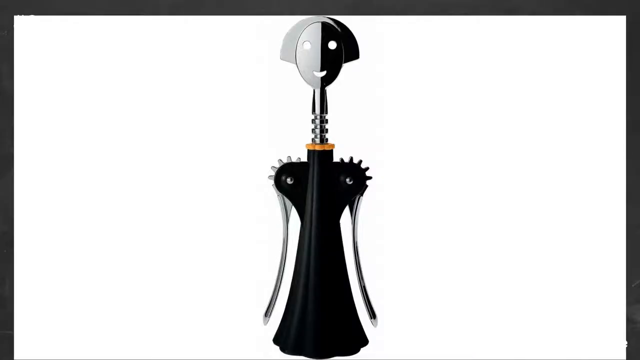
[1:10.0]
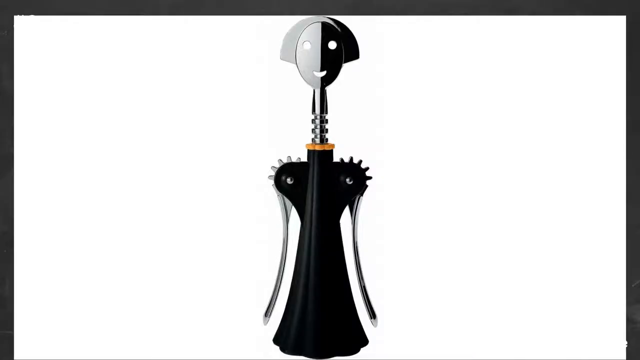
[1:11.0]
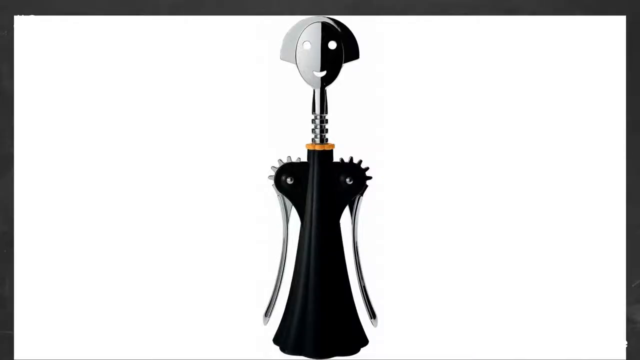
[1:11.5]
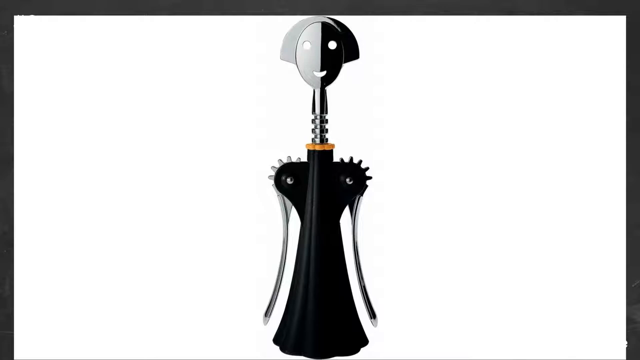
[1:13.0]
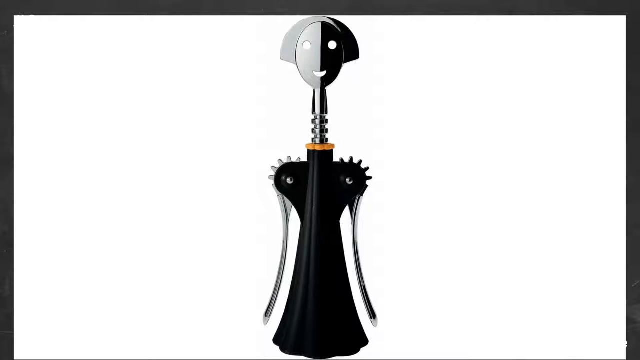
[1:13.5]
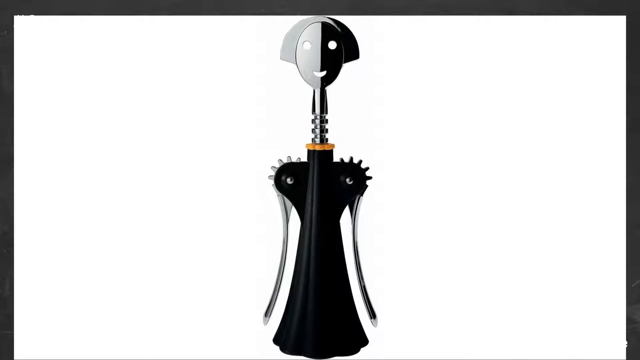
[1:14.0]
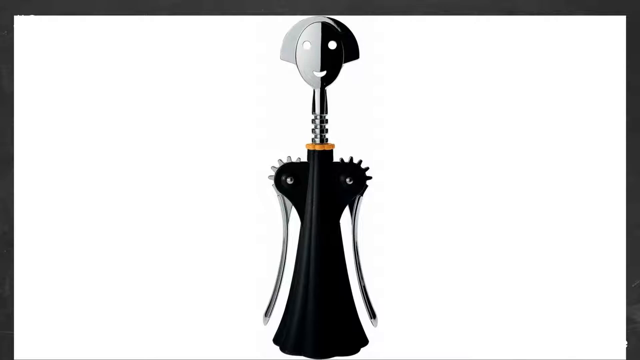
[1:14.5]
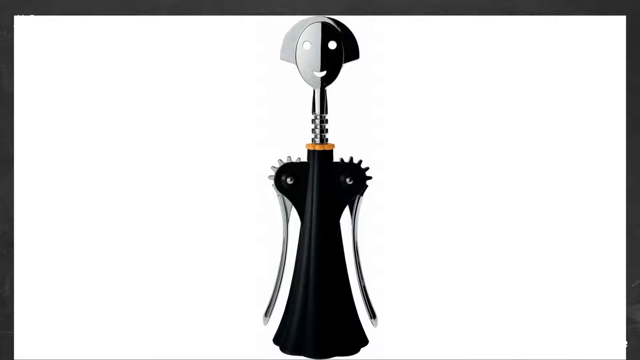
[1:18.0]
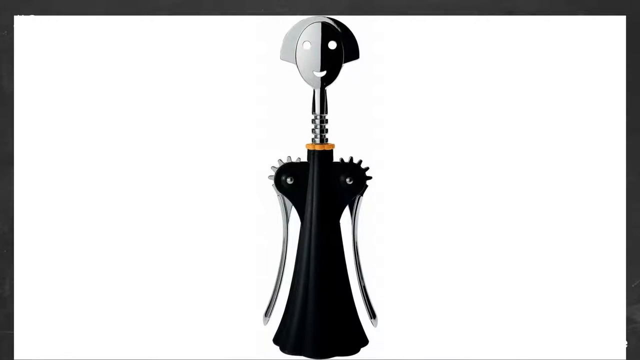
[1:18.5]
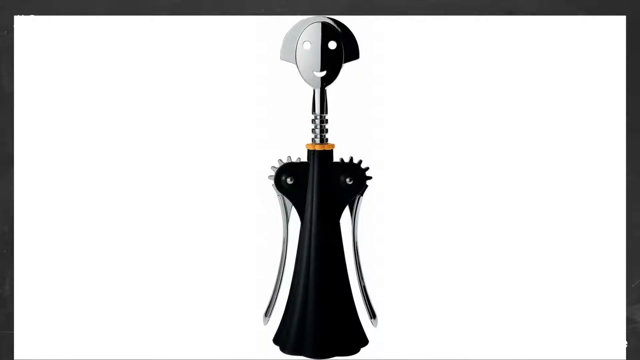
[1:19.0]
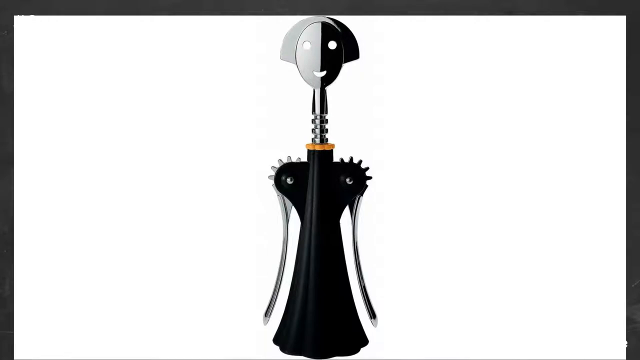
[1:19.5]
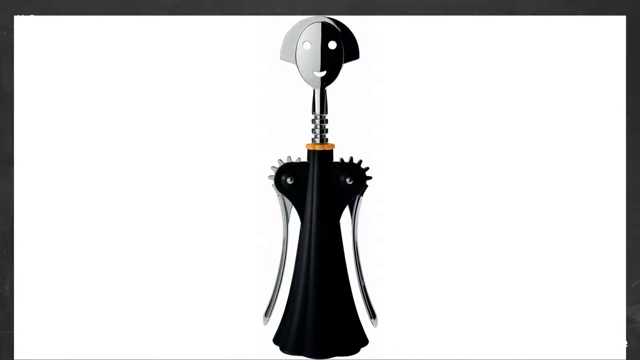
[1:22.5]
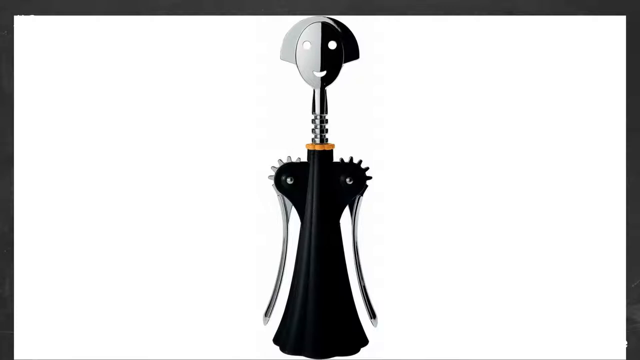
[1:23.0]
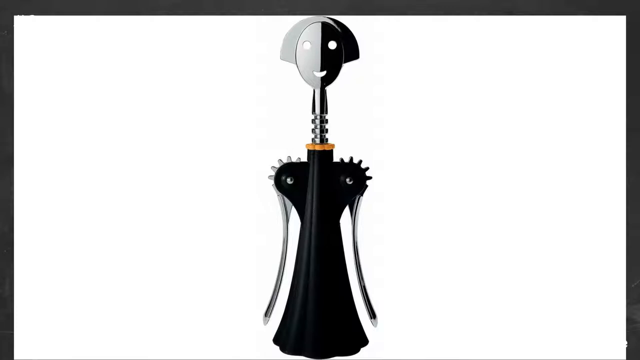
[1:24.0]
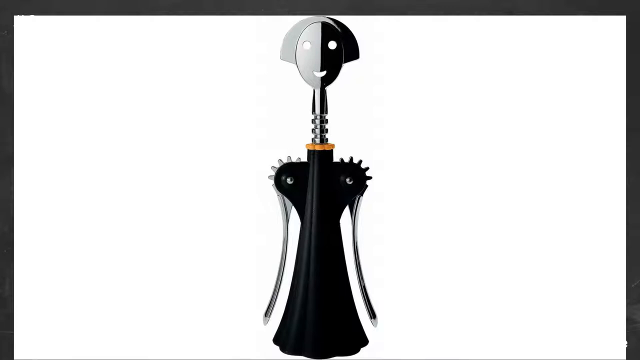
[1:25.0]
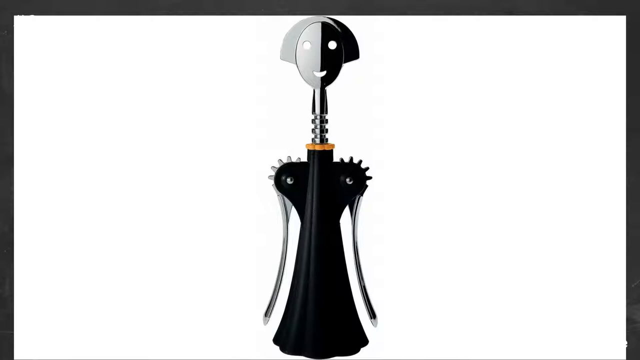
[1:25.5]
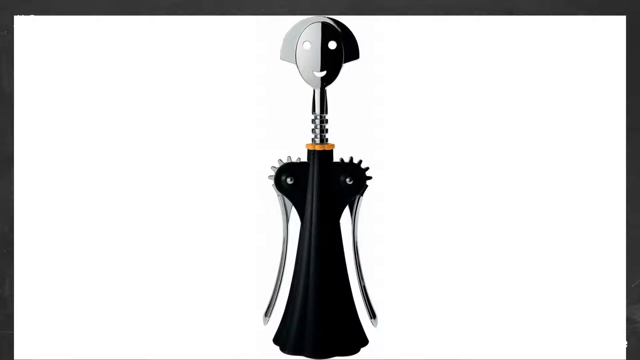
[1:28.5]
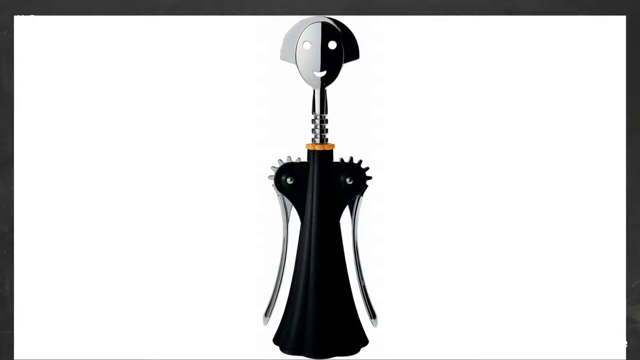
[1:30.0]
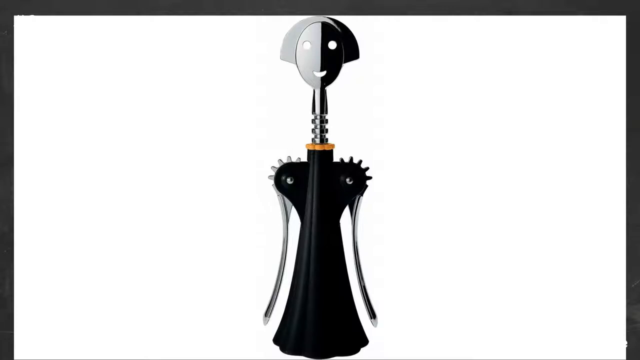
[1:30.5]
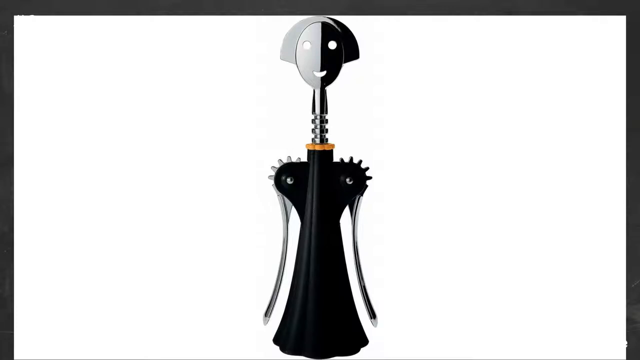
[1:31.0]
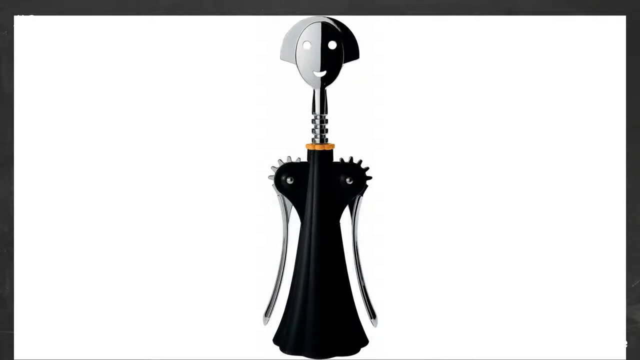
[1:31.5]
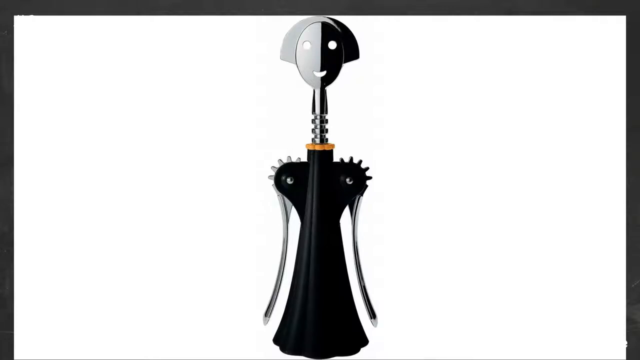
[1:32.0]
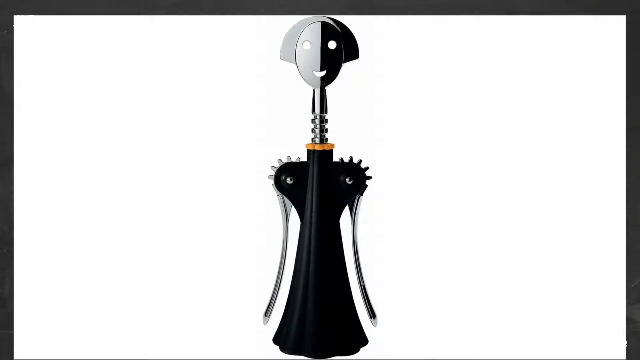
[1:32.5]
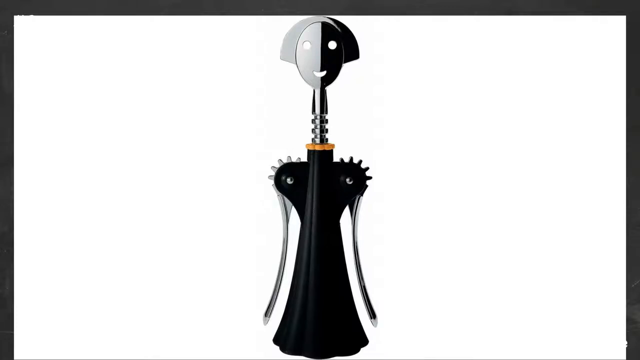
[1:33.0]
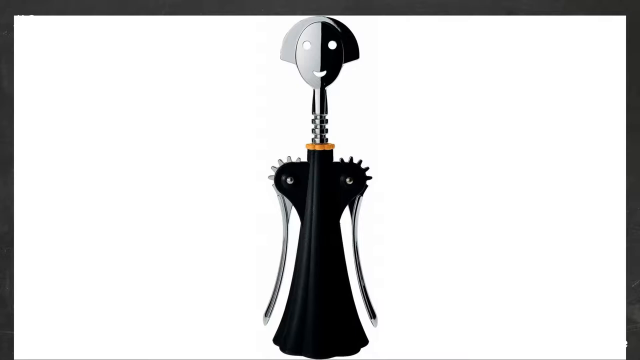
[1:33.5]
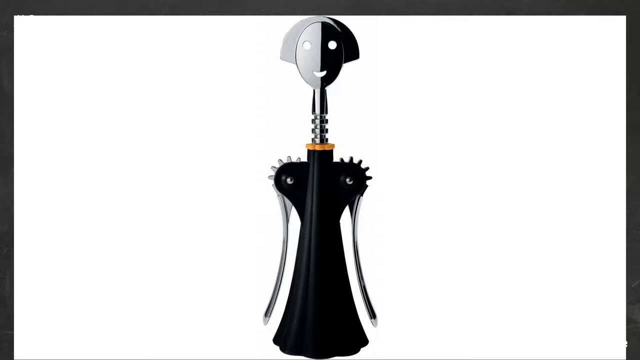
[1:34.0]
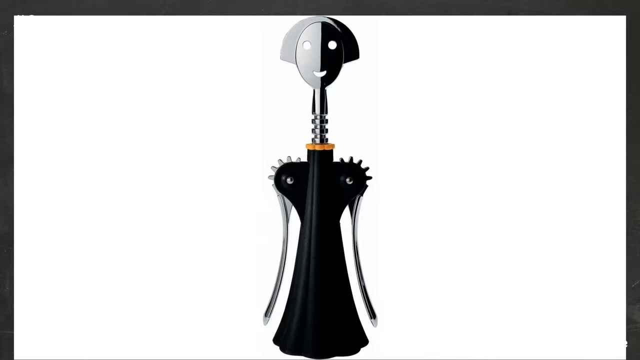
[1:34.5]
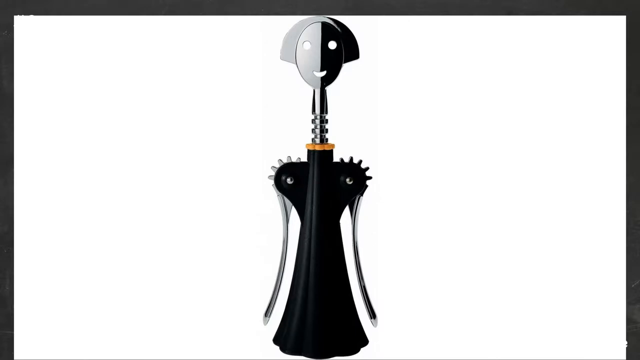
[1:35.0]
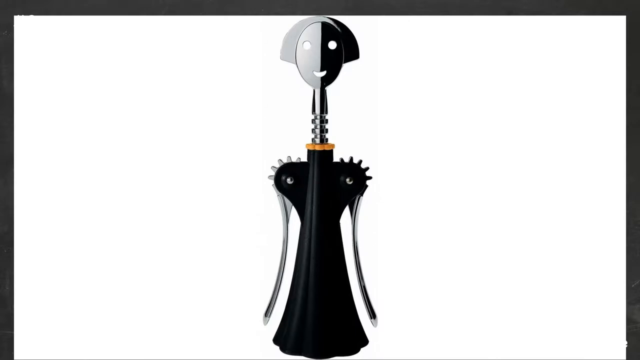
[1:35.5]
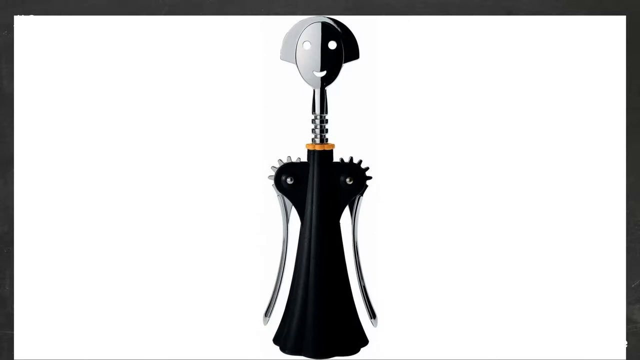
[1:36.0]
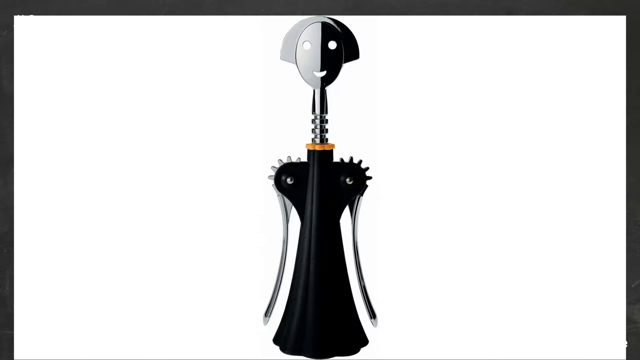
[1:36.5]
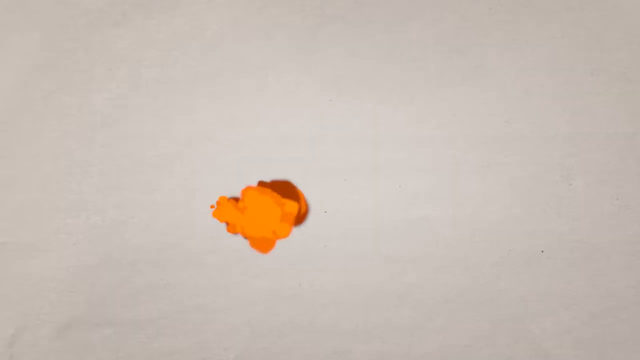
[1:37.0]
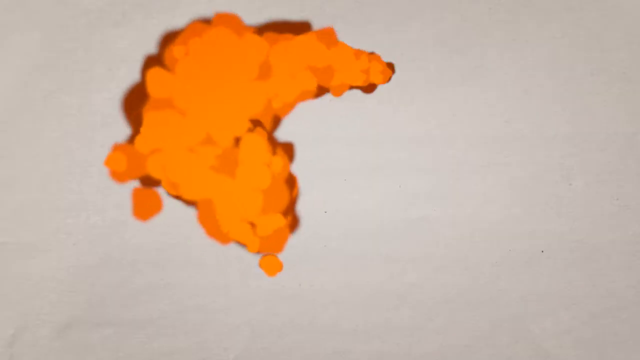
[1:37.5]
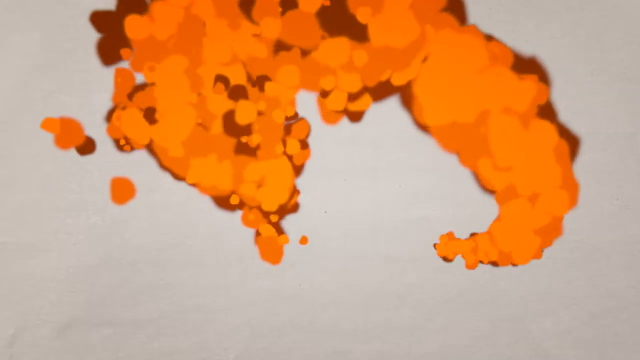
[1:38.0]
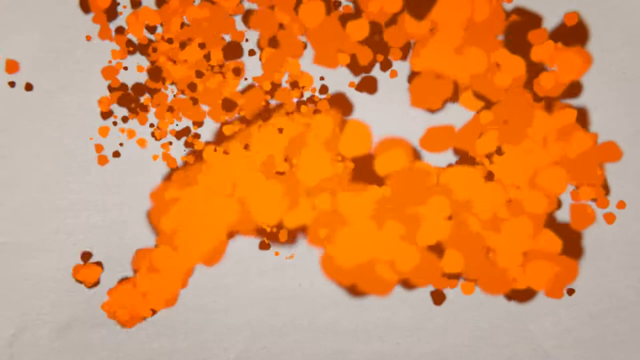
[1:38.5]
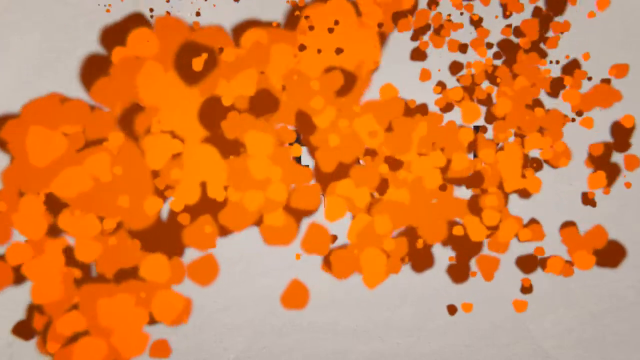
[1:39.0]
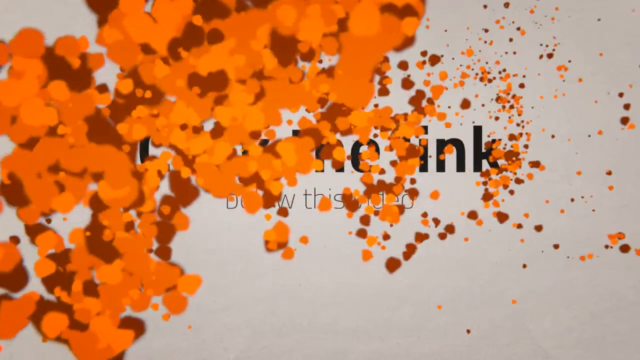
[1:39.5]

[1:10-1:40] The corkscrew is shown in another long look against a white background. The eyes and mouth kind of punched out of it and its turning mechanism seem to give it a human quality; at a glance it looks like a woman with kind of a short bob haircut wearing a dress with her arms at her sides.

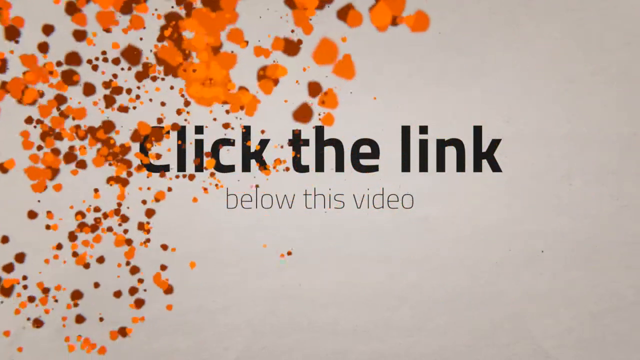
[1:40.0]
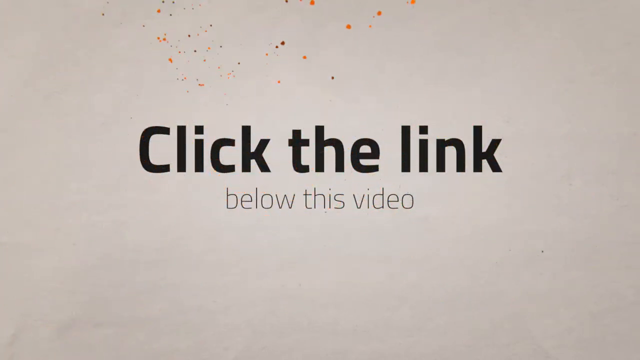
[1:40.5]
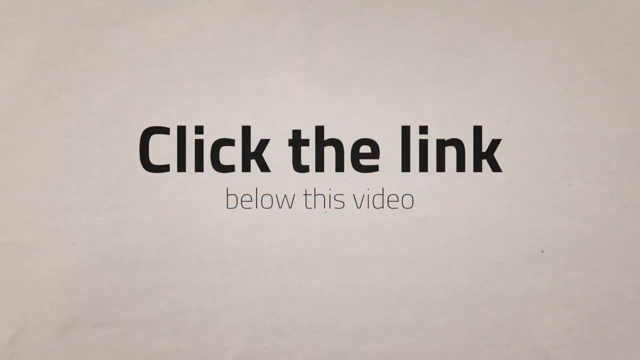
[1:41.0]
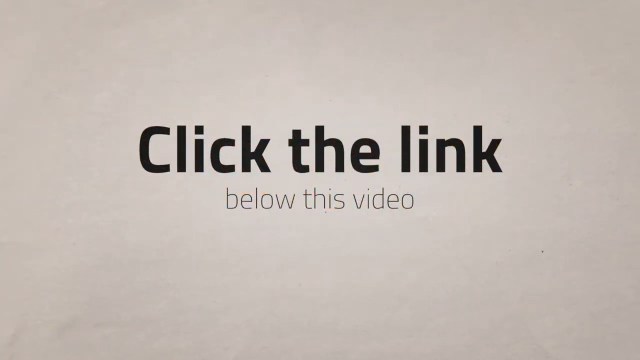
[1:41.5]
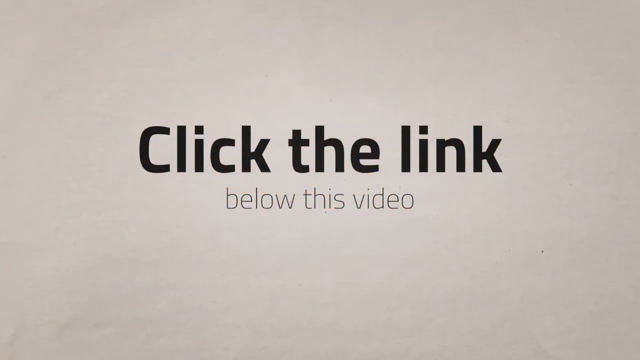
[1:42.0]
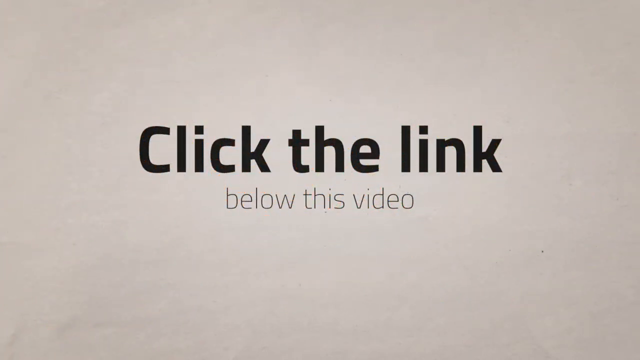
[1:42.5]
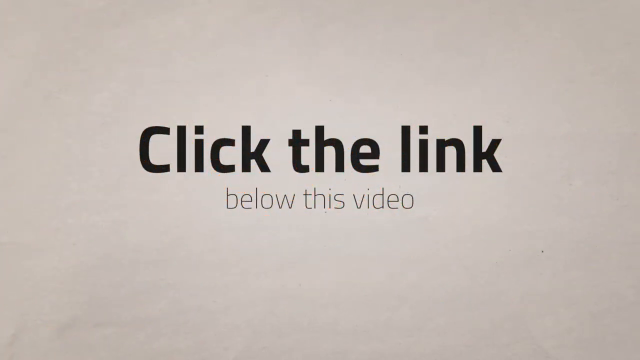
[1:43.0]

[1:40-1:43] An orange graphic pops up on the screen and kind of dissipates toward the top left of the screen. All that is left is a white background with "click the link" in bold black letters, and below it, in much lighter, smaller gray letters, "below this video".